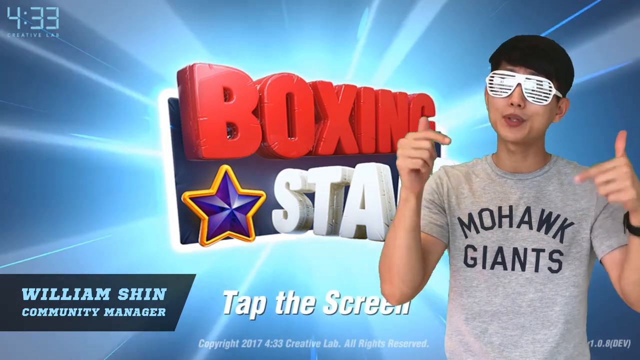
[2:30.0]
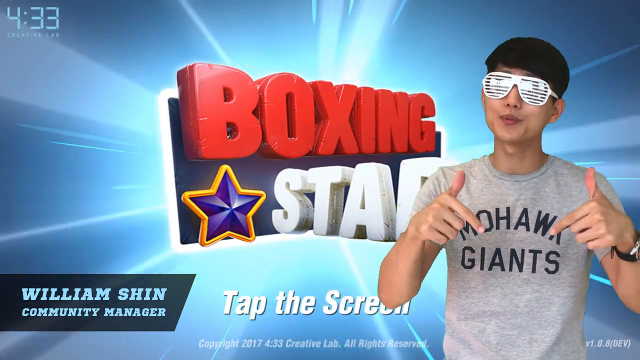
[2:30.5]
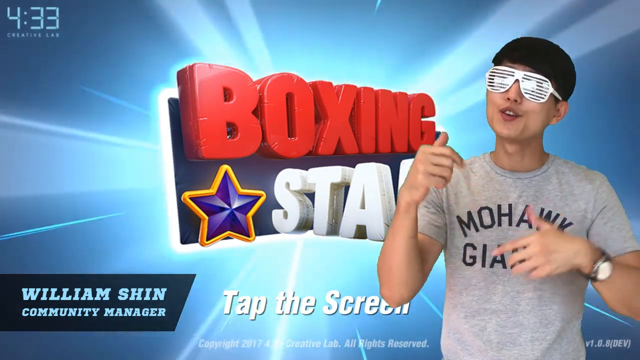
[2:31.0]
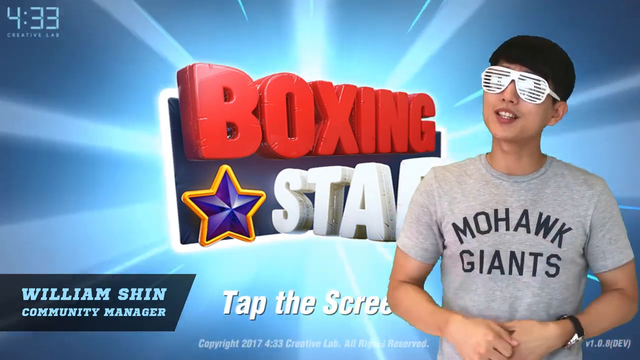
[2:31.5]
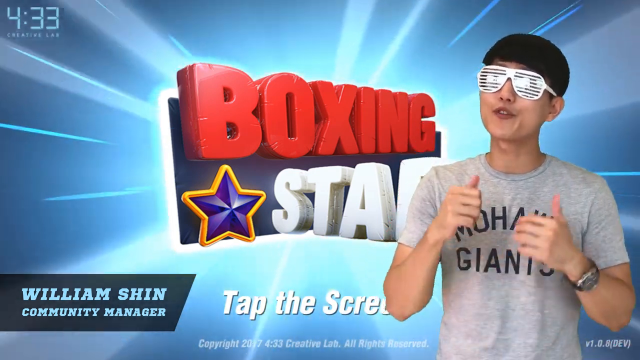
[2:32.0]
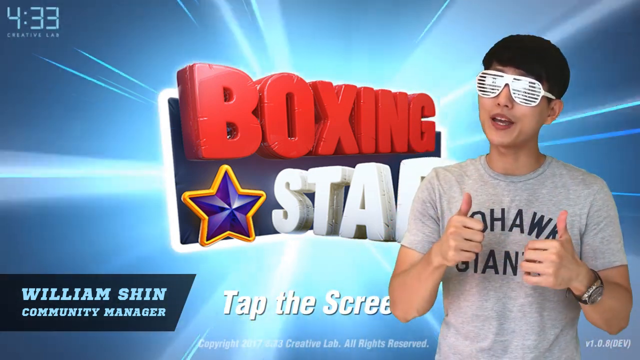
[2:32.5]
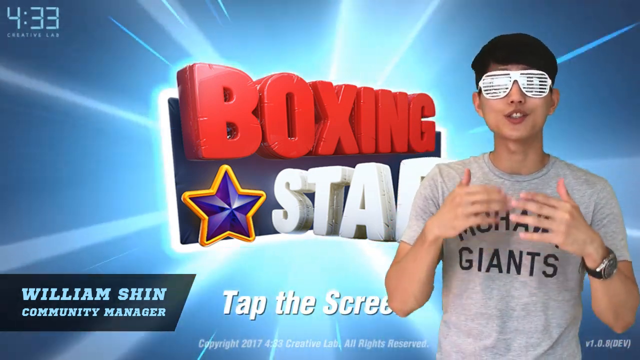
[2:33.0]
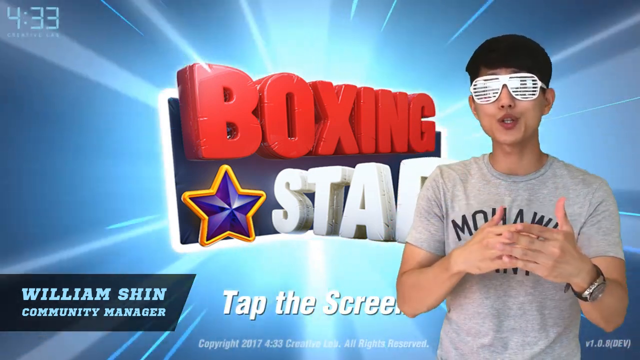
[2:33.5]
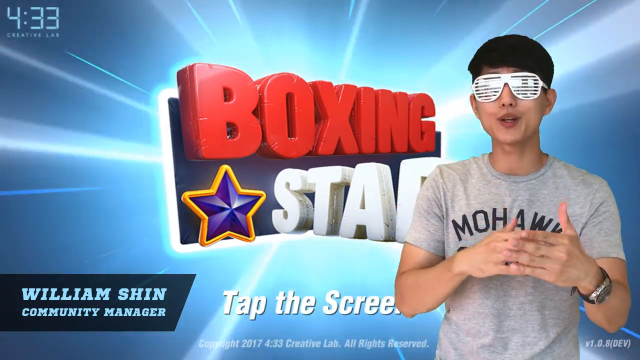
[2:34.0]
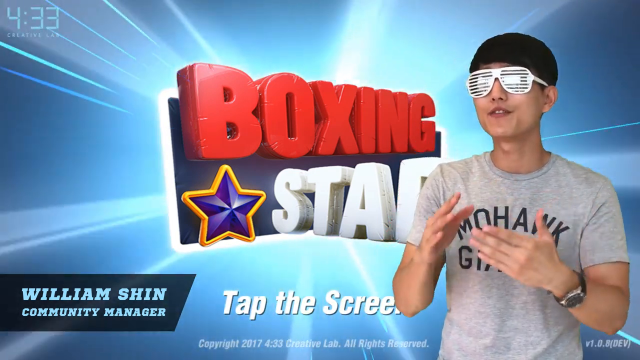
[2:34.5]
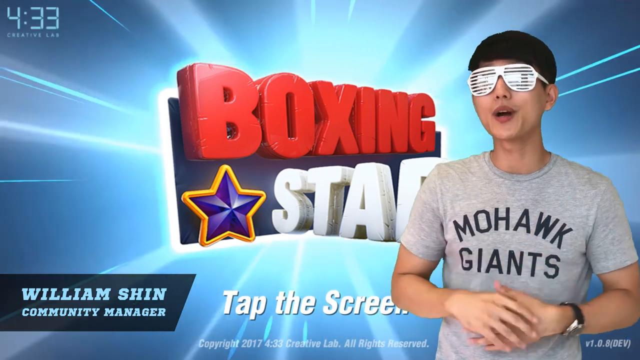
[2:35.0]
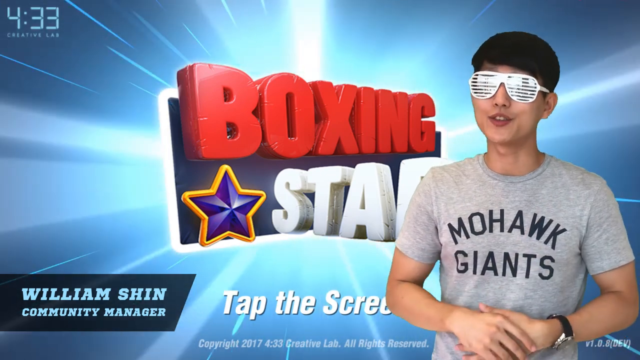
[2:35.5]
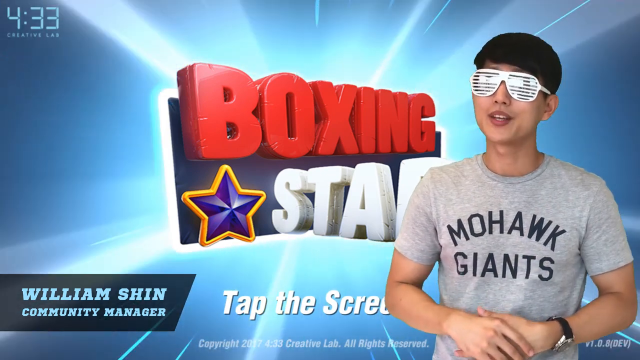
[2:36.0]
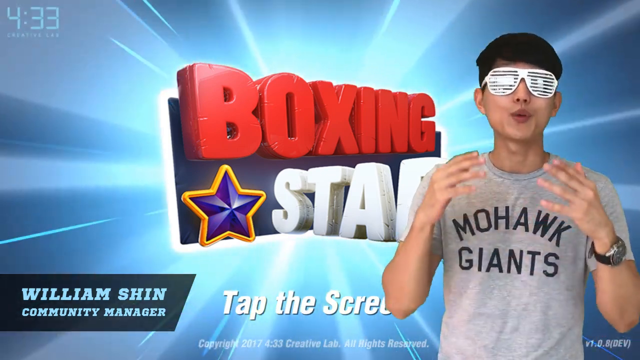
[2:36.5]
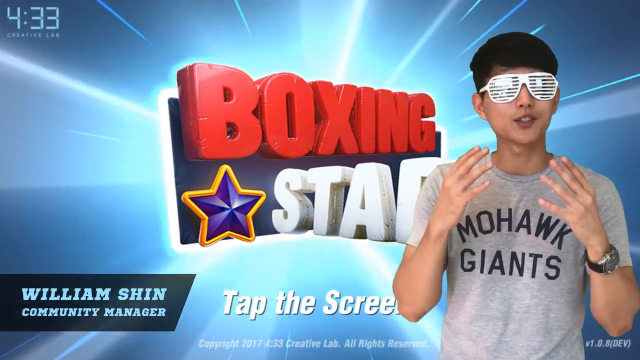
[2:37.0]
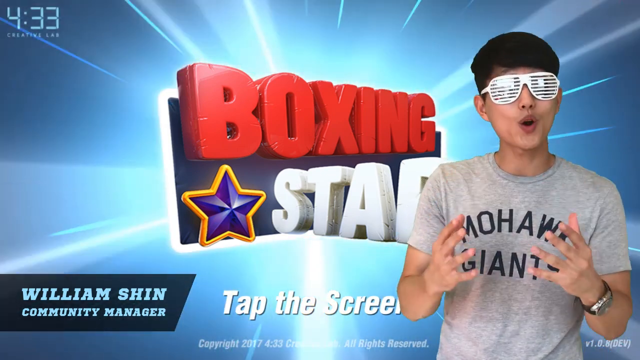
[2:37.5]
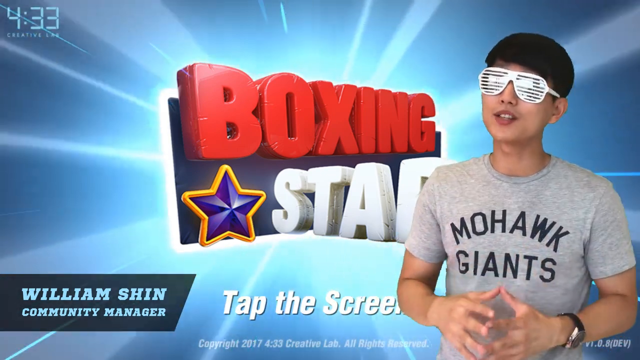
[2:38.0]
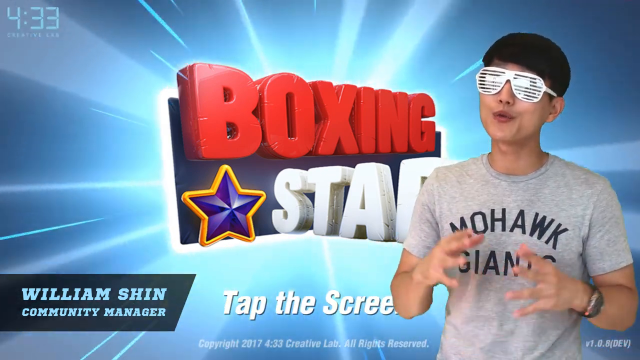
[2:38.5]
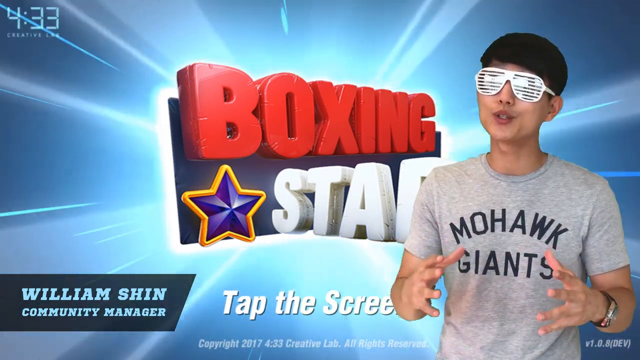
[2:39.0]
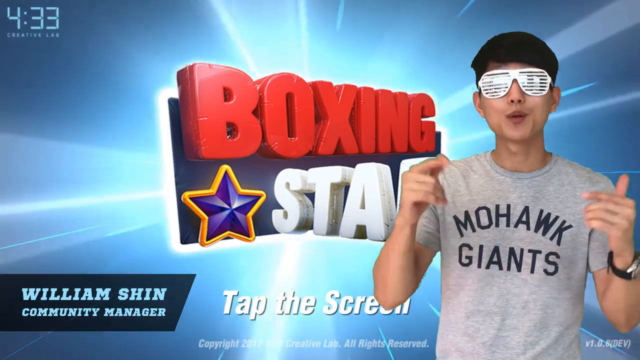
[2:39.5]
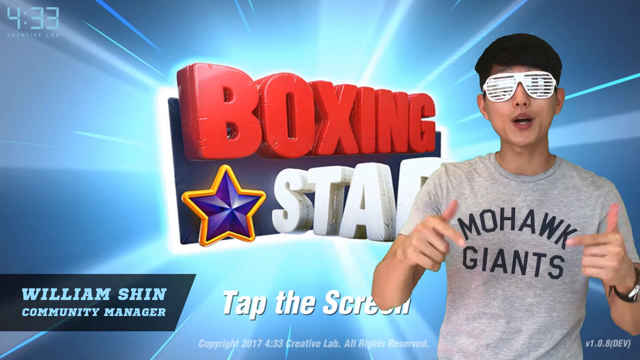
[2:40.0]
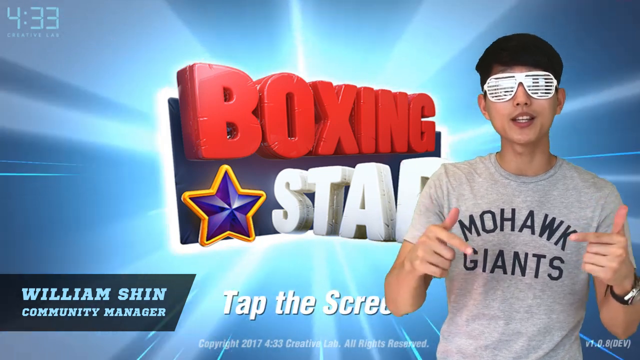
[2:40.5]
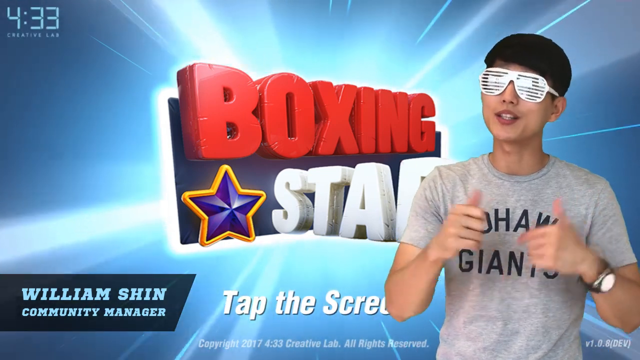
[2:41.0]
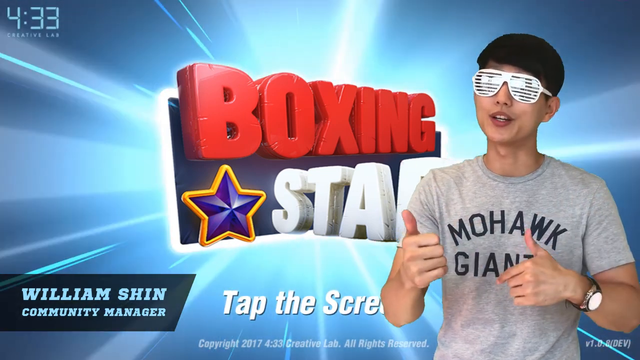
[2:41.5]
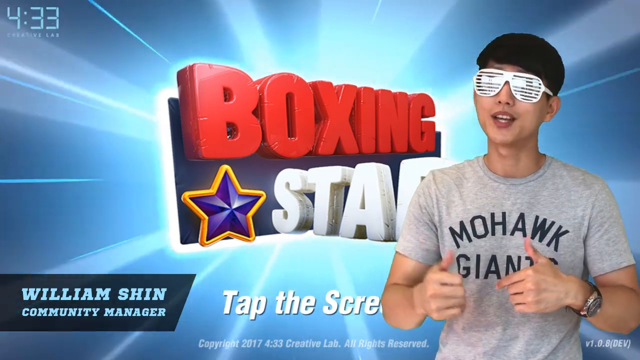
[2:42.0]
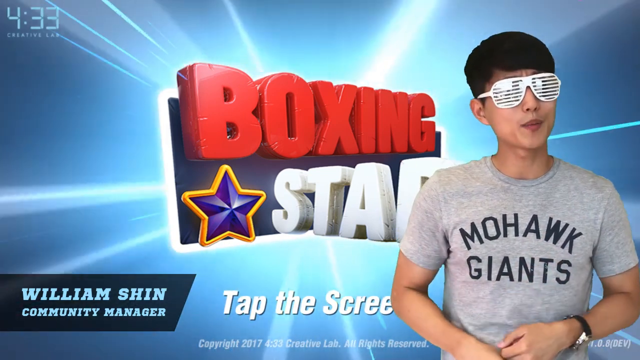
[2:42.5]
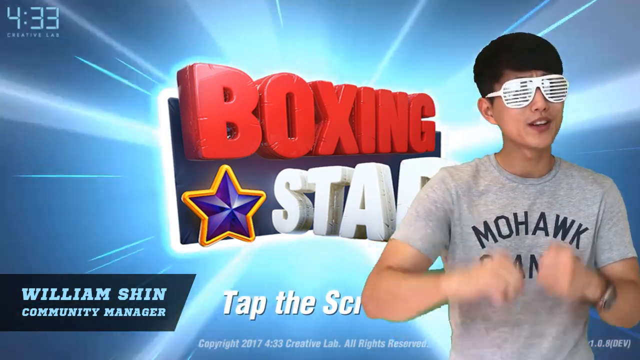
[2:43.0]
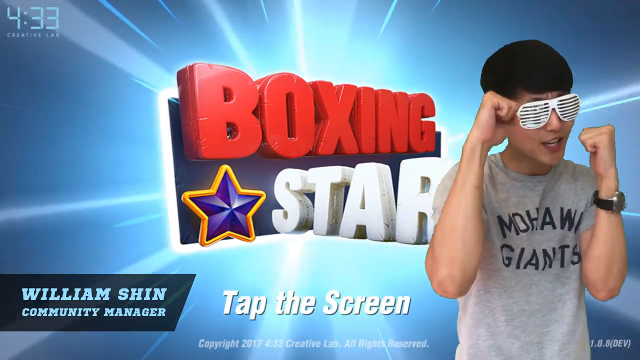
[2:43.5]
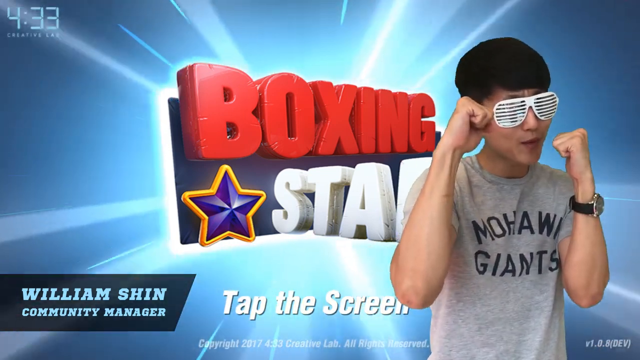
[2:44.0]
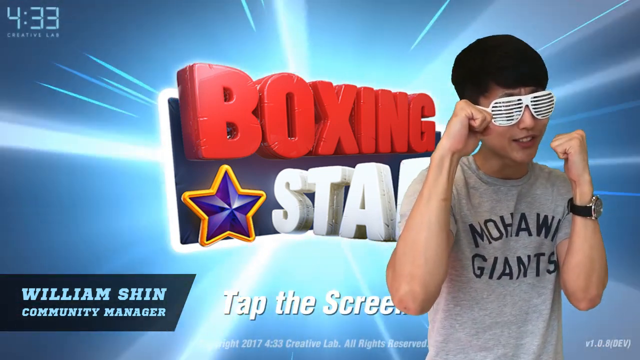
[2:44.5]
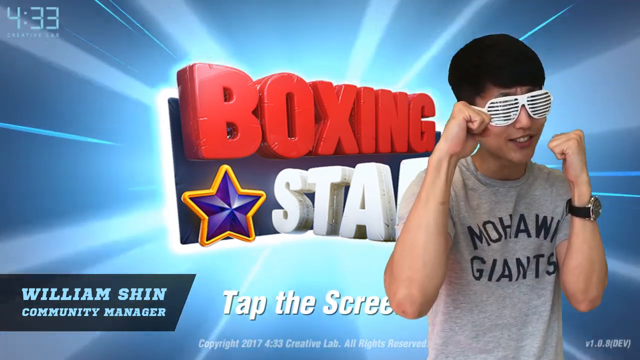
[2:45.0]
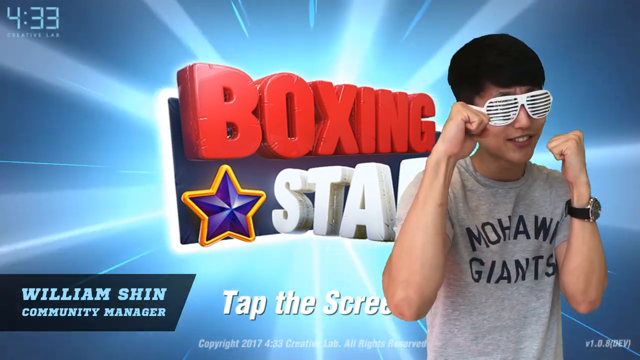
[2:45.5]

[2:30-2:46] William talks facing forward toward the camera in front of the Boxing Star background with "tap the screen", unchanged from the beginning of the video. The game looks like it is called Boxing Star. He uses his hands in a determined, deliberate, matter-of-fact way, as if emphasising points, and moves his fingers around. He then takes a boxing stance toward the screen: both hands are made into fists pointing up, his arms at right angles to his body, his left hand pulled back toward him with a watch on the left wrist, and his right arm forward. He has a very happy face, and the stance appears playful rather than angry.